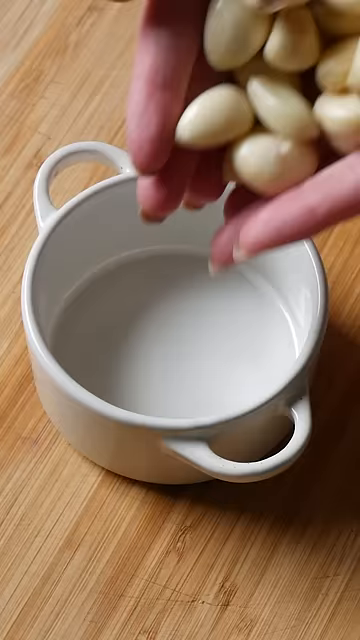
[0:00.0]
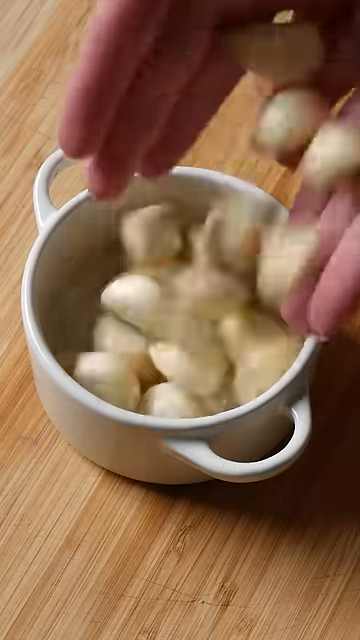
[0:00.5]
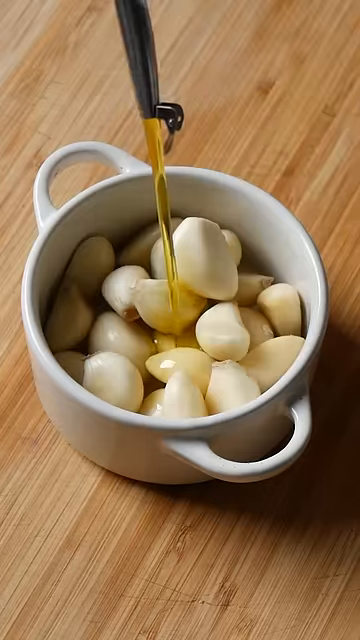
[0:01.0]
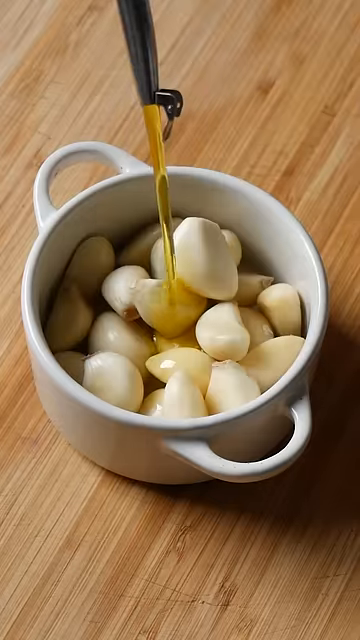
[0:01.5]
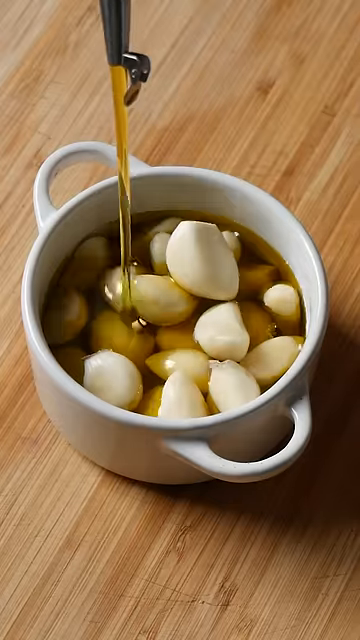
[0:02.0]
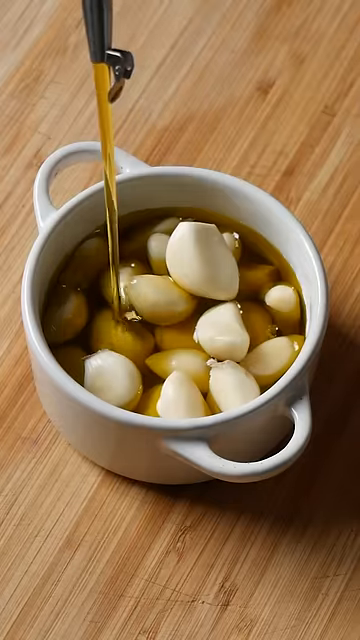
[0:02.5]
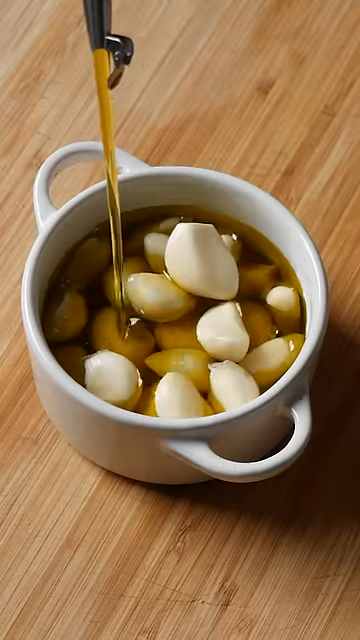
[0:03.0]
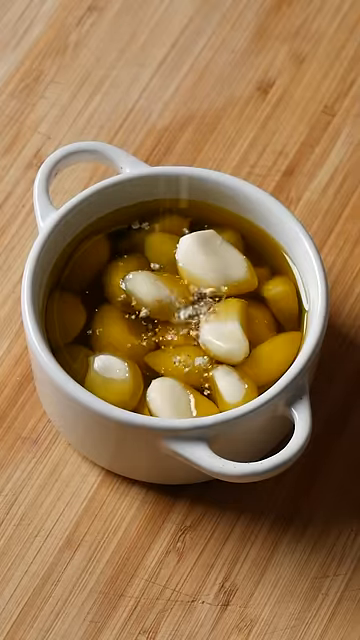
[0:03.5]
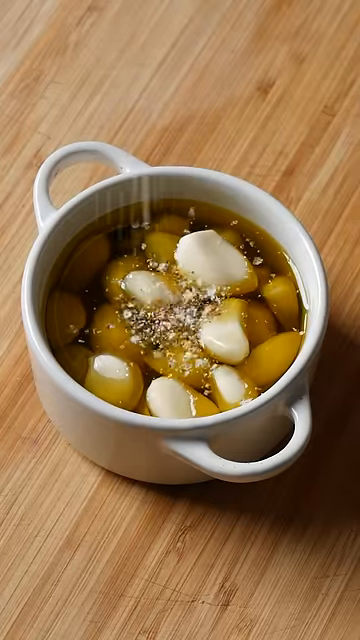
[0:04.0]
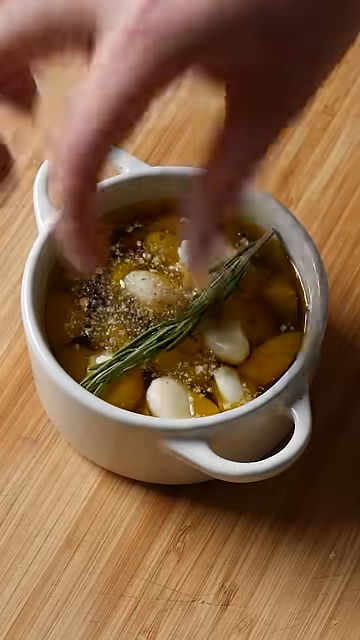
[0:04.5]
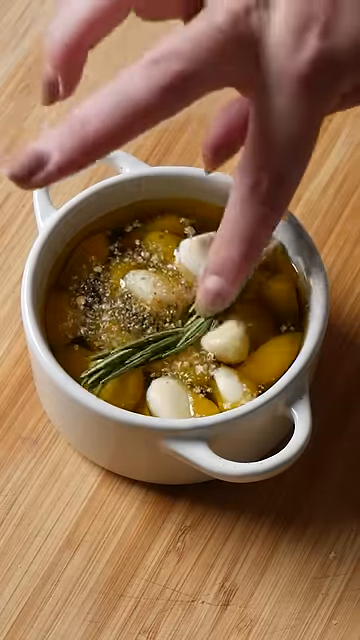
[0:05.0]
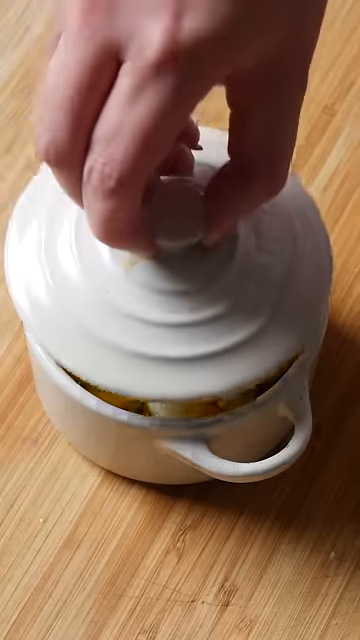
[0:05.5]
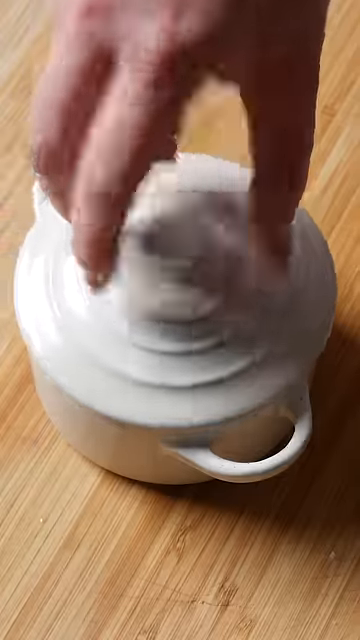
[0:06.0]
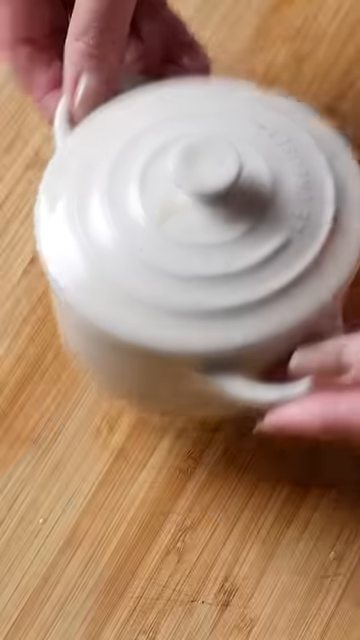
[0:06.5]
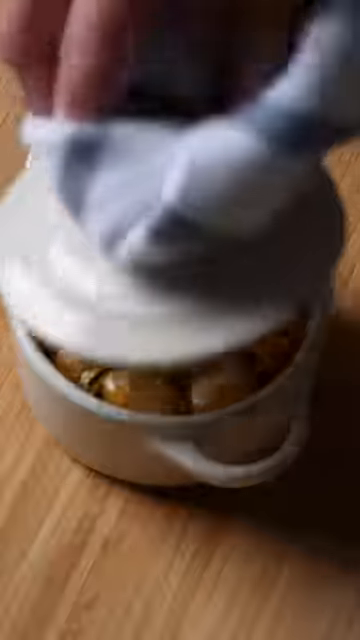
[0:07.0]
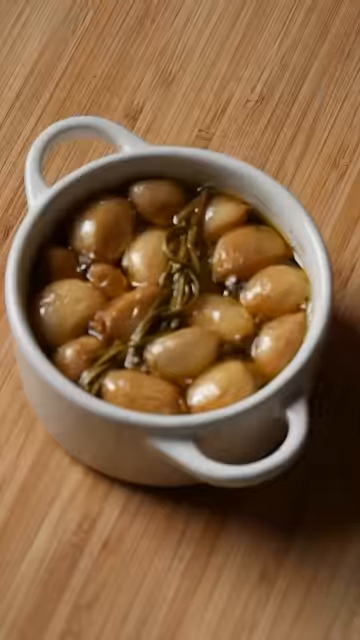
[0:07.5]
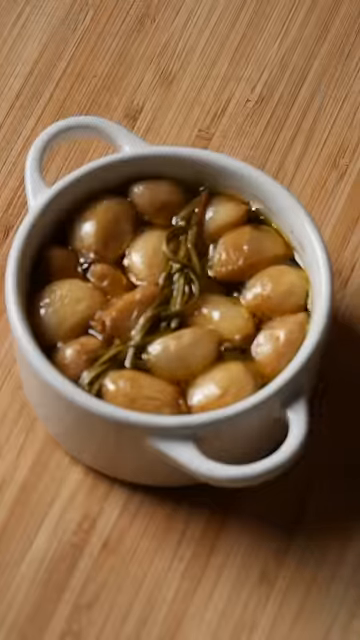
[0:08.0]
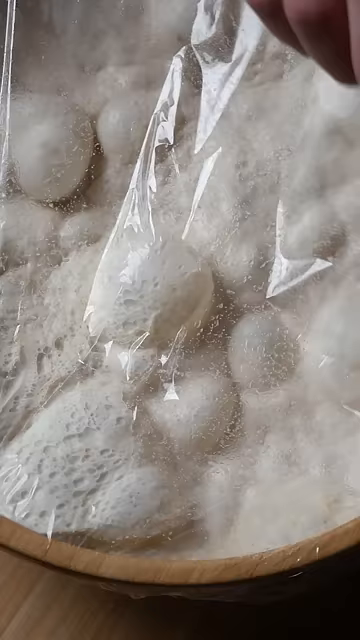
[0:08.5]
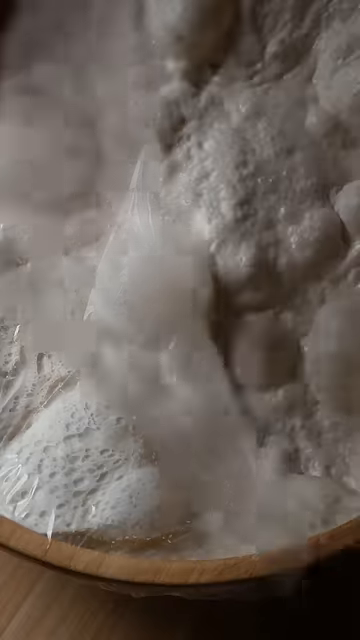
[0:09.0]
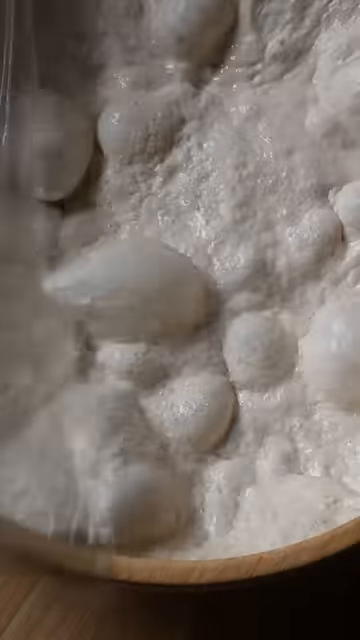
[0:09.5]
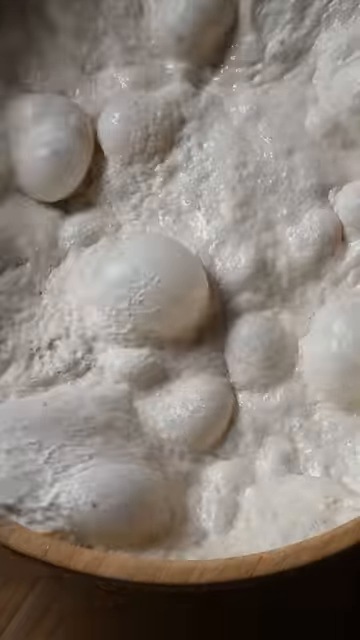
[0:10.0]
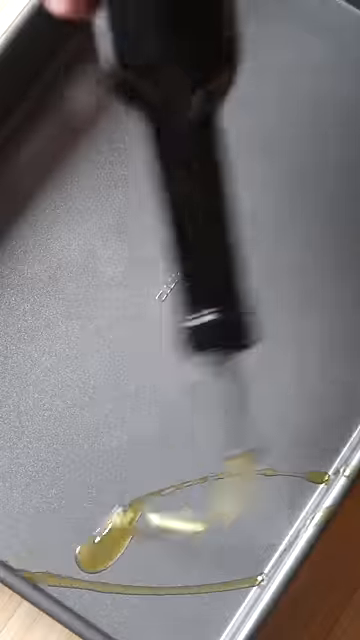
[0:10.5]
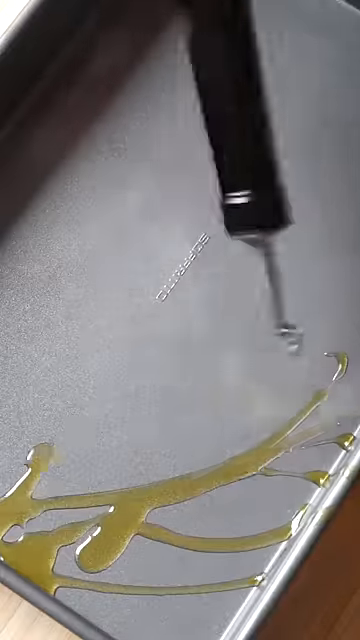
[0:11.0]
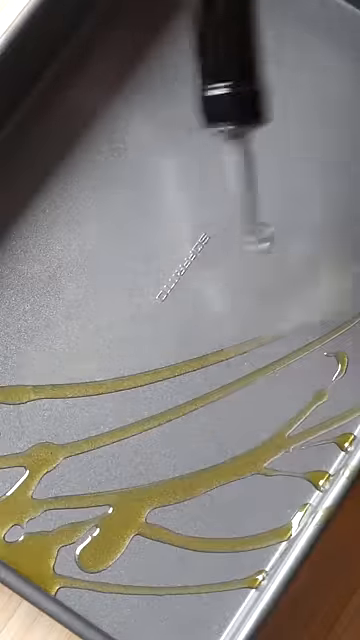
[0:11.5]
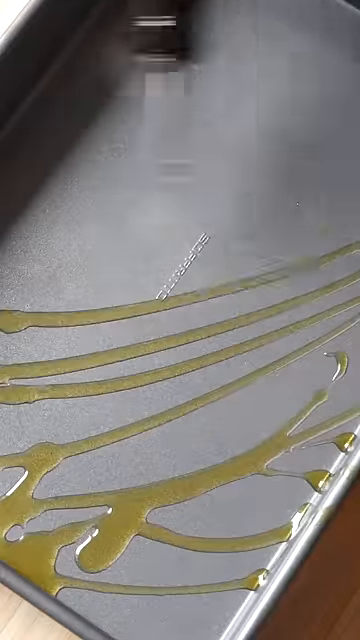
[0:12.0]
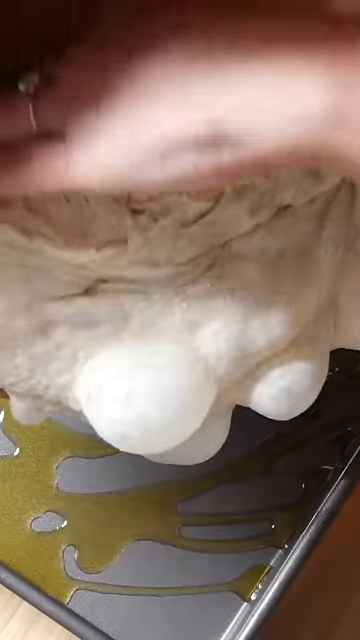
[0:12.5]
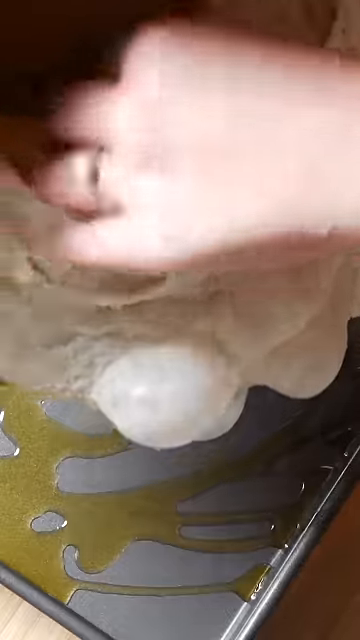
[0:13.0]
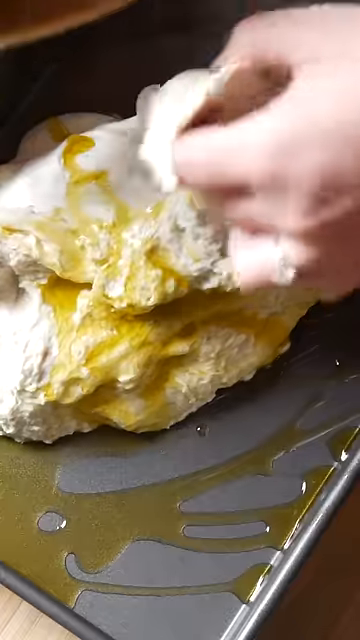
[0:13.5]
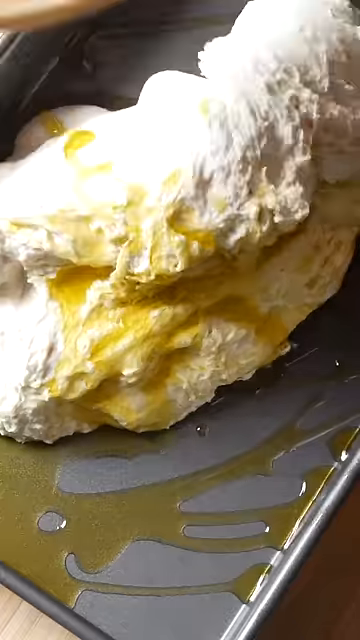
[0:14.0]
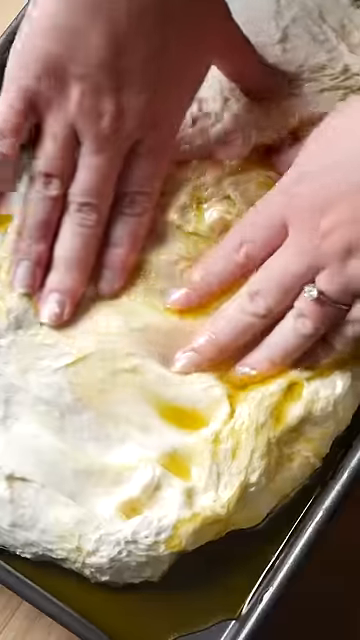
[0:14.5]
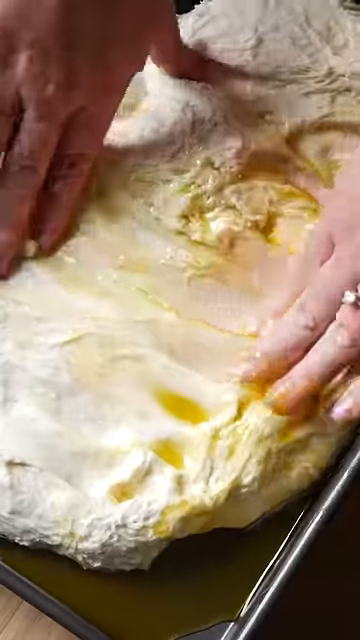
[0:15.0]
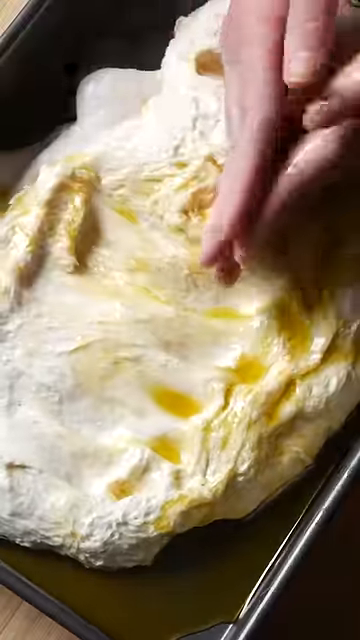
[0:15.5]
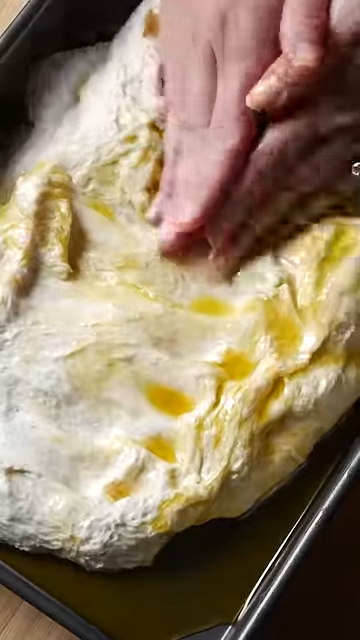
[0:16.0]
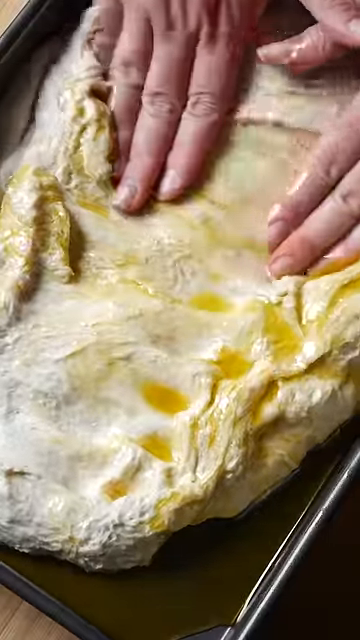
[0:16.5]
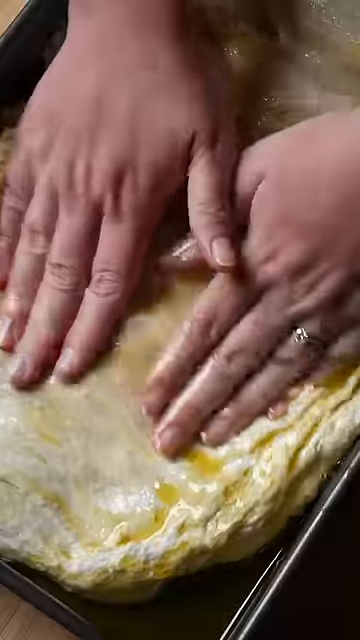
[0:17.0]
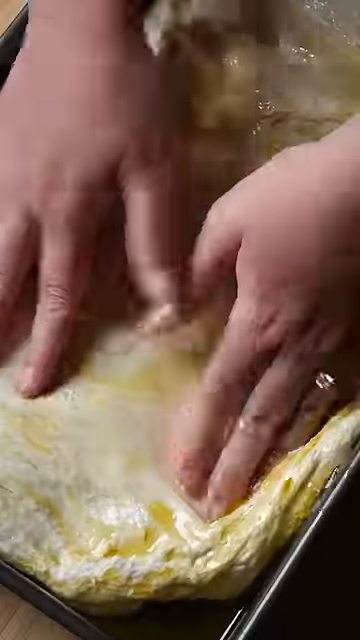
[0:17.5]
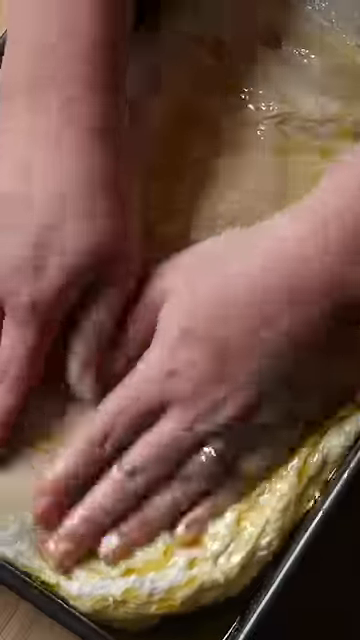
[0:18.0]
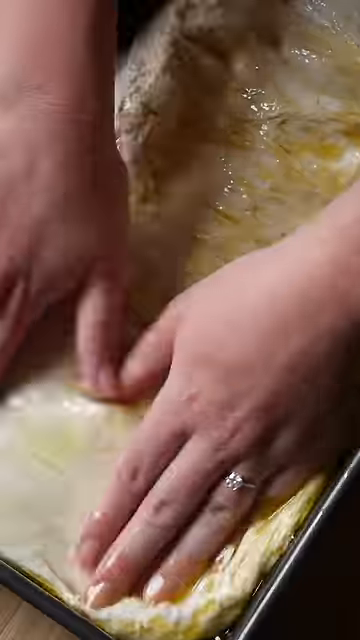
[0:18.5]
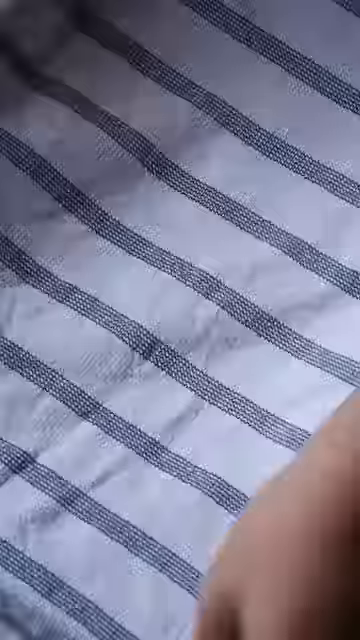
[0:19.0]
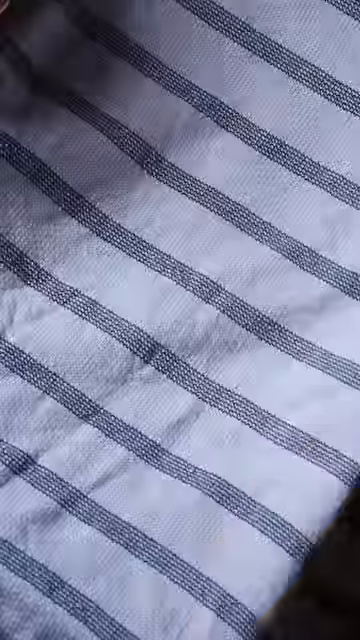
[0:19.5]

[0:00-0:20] The video is titled Garlic Confit Sun-Dried Tomato and Baby Bocconicini Focaccia. It begins with the chef adding raw, de-skinned garlic into a mini Le Creuset pot along with olive oil, salt and a sprig of rosemary. After the lid goes on the pot, the video moves to the focaccia dough. The person oils the focaccia pan and layers in the dough, spreading it to the edges of the oiled pan. The dough is covered with a striped dish towel and left to sit, then fresh oil is added to the top. Fingers are pressed into the dough, massaging it to create air holes and pockets where the fingers were. The roasted garlic and sun-dried tomatoes are placed into the uncooked focaccia along with herbs and cheese balls. The finished focaccia is shown lightly browned from the oven, and at the end a young woman with her hair pulled back smiles excitedly.